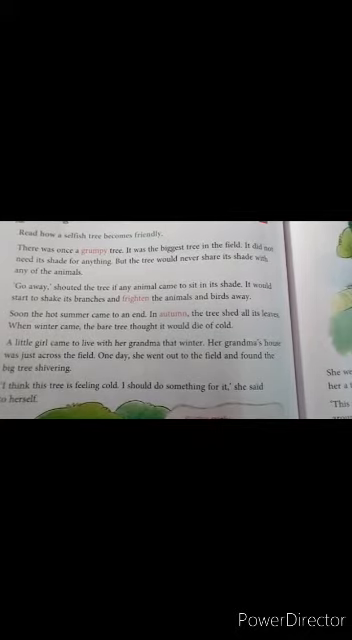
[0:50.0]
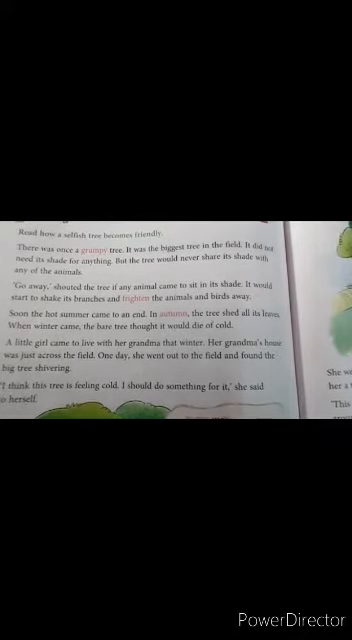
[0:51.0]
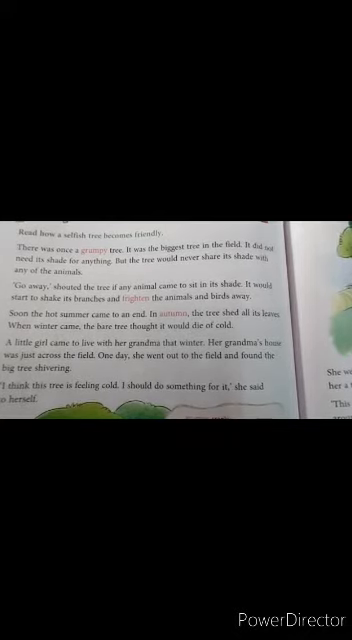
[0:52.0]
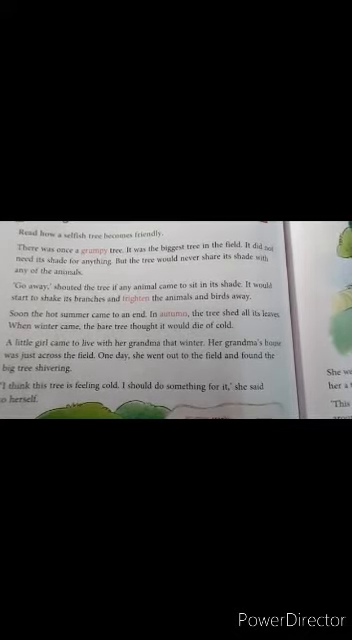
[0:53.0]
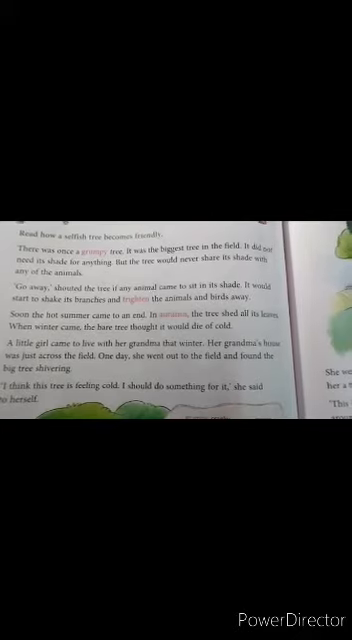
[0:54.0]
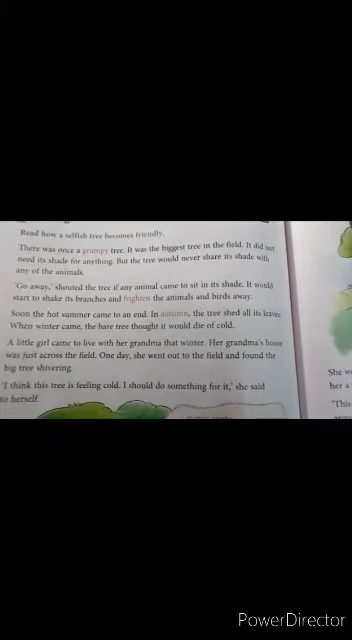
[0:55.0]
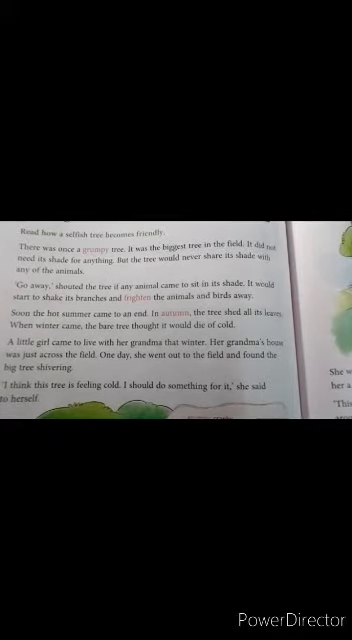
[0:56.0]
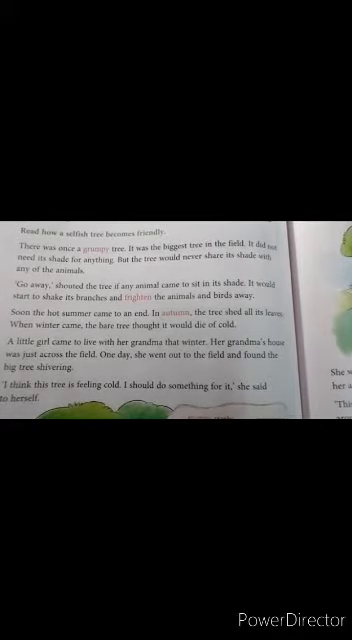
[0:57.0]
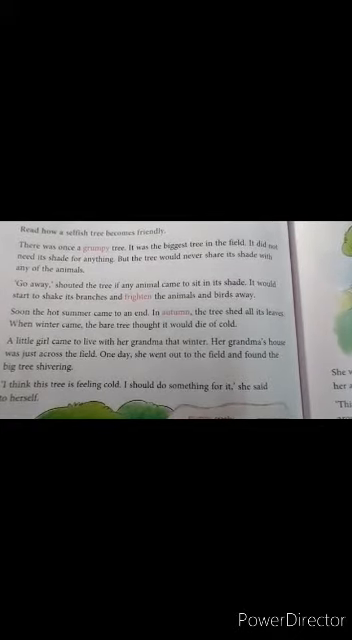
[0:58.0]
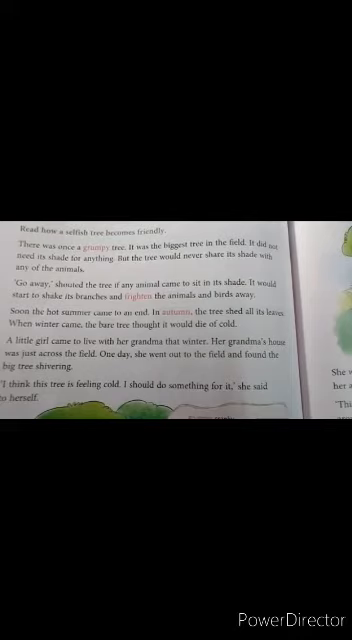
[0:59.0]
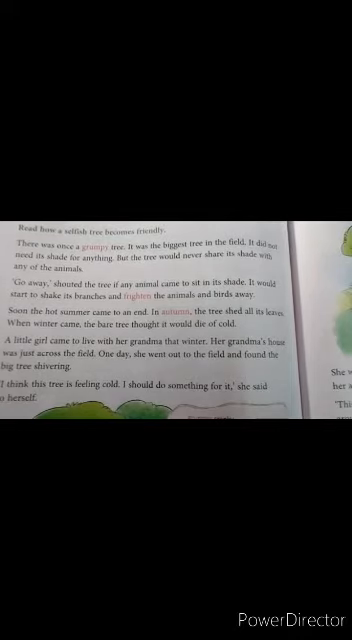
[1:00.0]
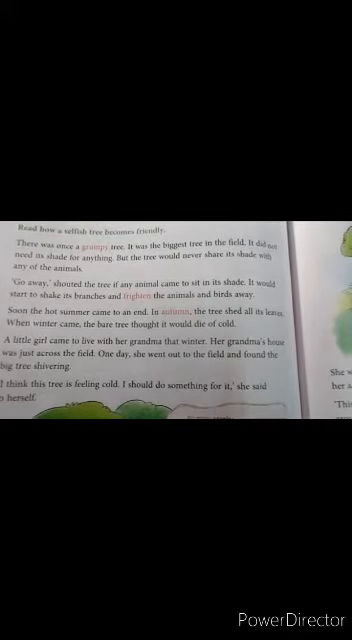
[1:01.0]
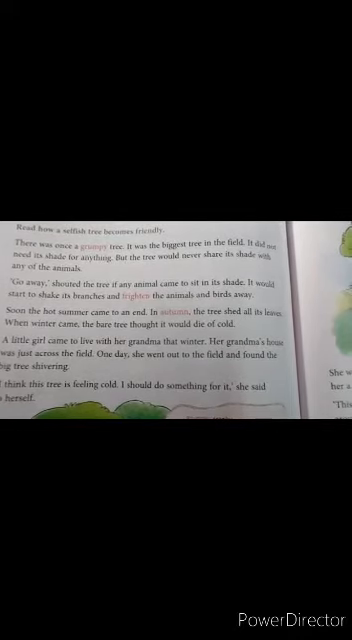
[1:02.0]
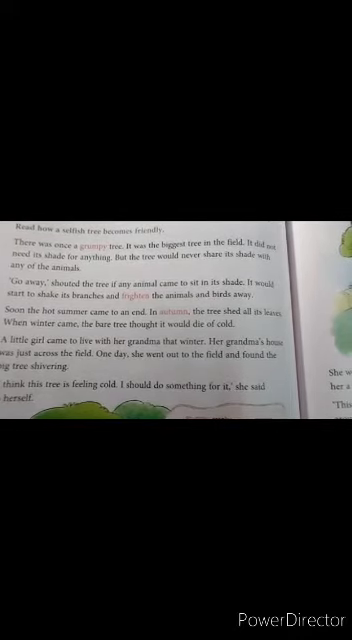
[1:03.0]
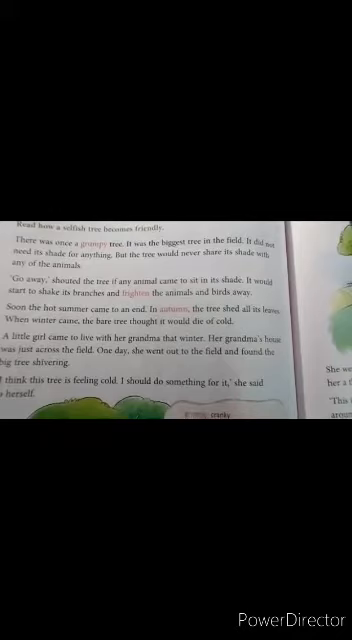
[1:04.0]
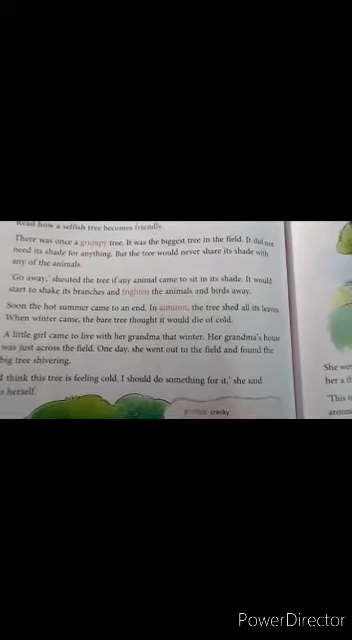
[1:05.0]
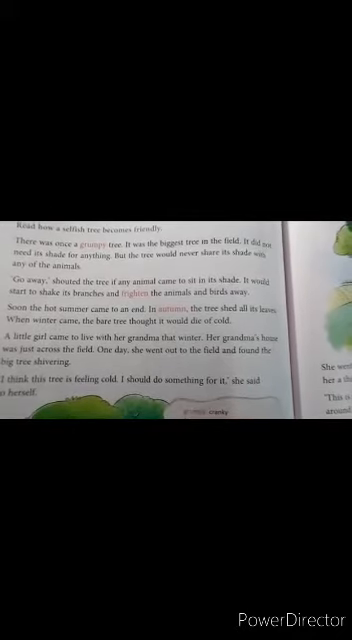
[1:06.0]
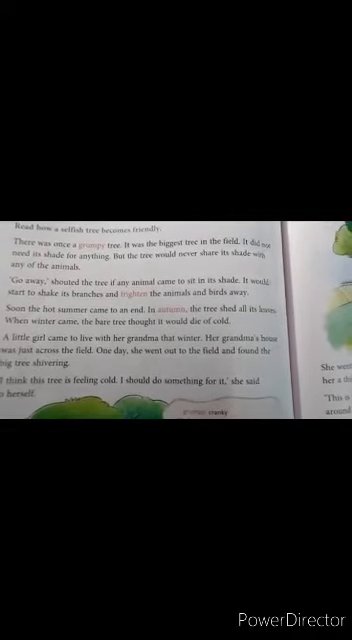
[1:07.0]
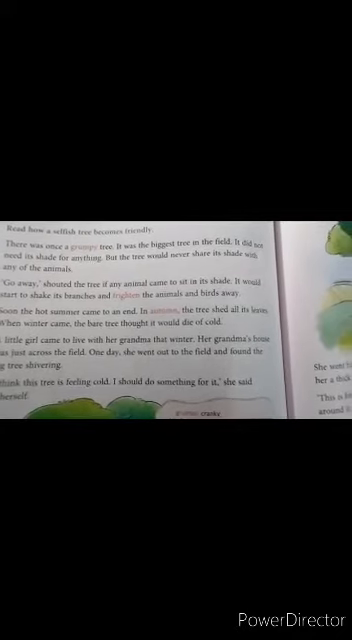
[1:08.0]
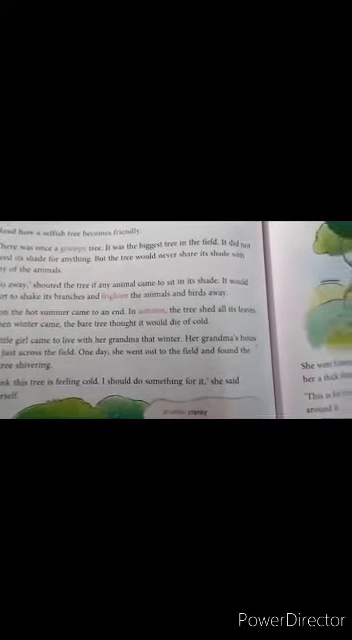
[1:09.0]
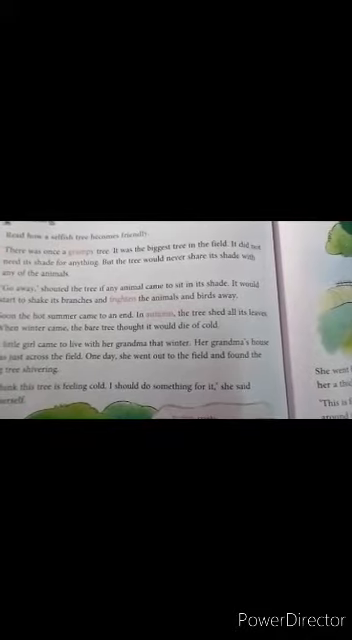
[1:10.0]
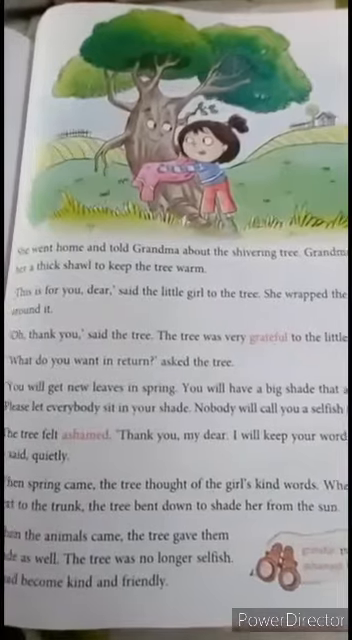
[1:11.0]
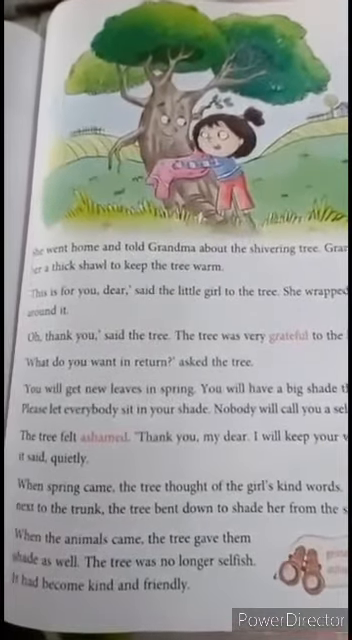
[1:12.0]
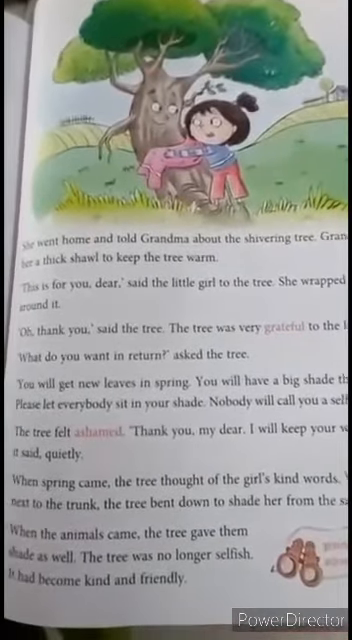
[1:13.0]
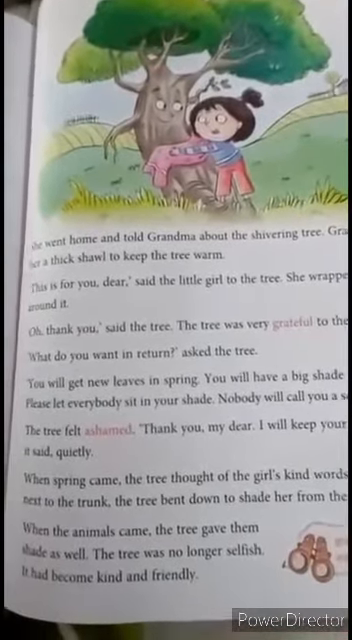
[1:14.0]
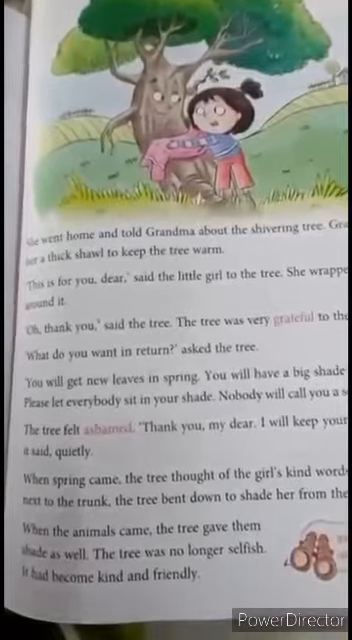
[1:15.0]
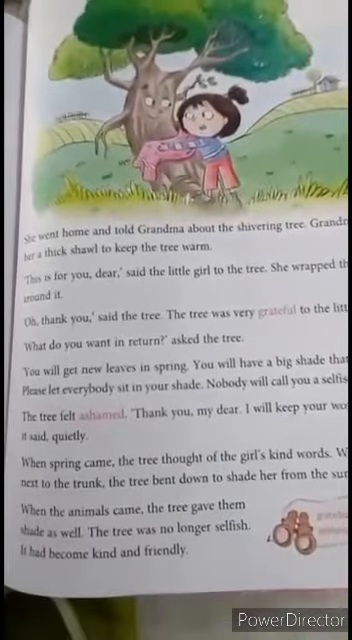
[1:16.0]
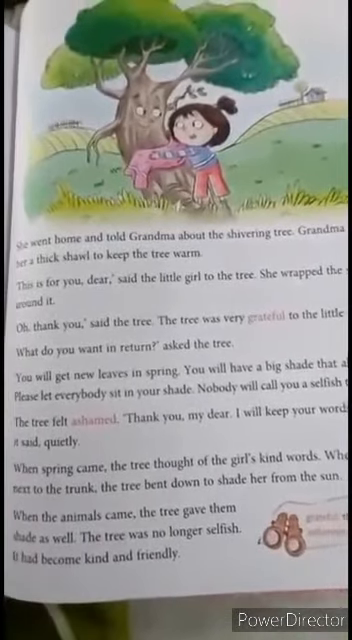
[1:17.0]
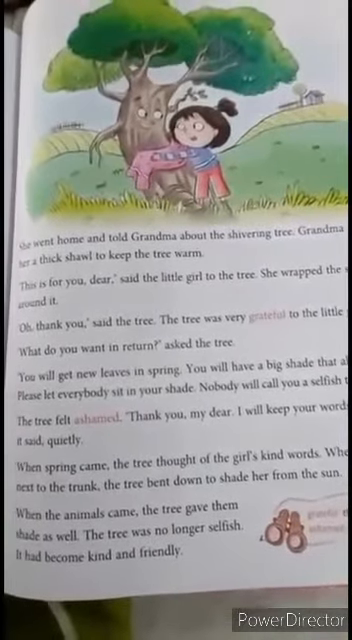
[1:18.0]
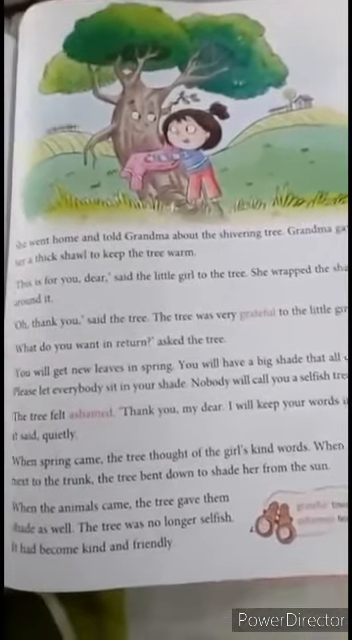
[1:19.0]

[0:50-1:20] A child's book lies open and is presumably being read. A watermark in the lower right-hand corner reads "power director." At the bottom of the page is the top of what is probably a tree, green in color. To the right, the beginning of another page shows an illustration on its left side. The words on the left page are blurred; there are five paragraphs, maybe six, but the words are too blurry to read.